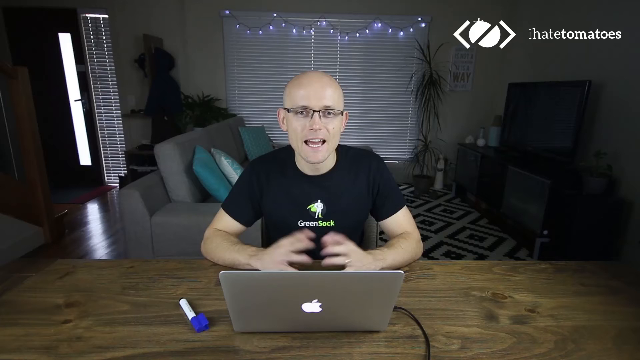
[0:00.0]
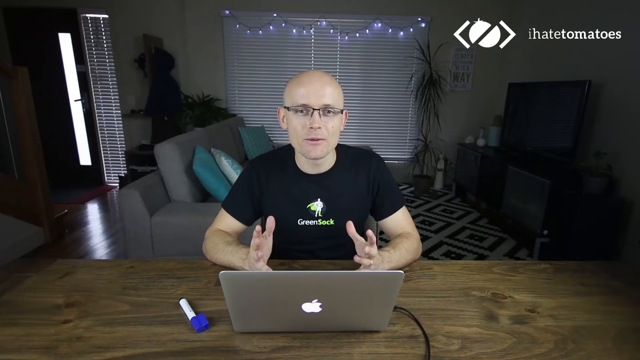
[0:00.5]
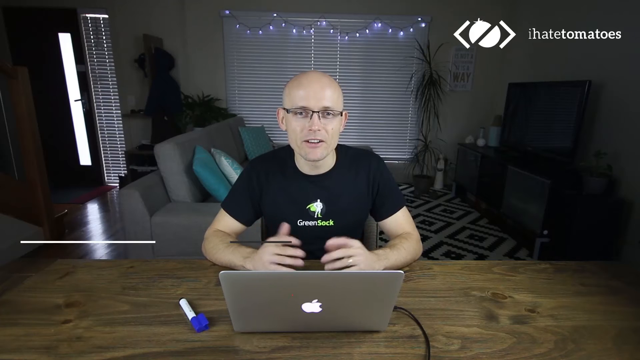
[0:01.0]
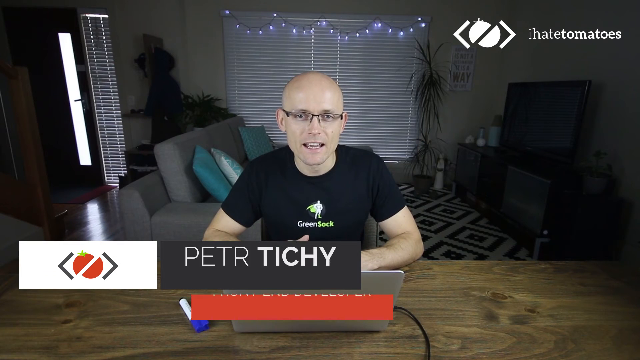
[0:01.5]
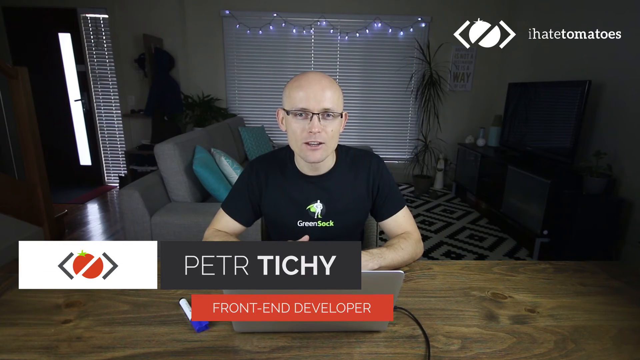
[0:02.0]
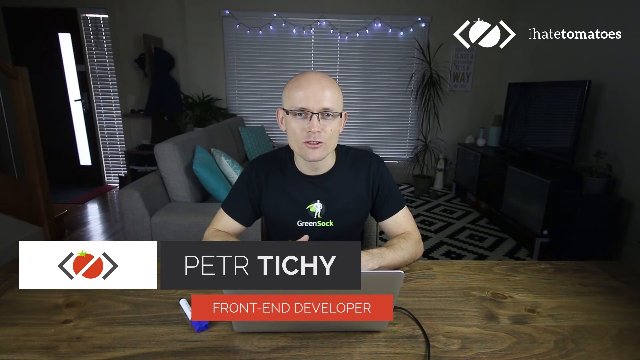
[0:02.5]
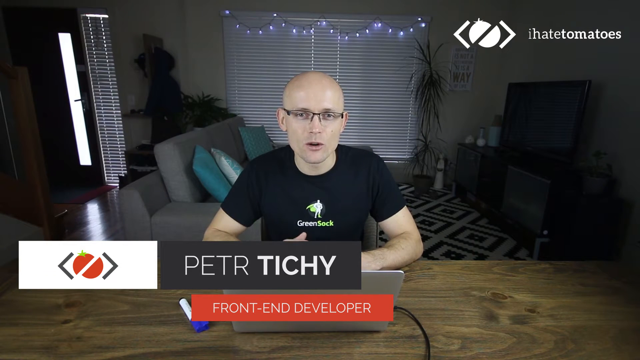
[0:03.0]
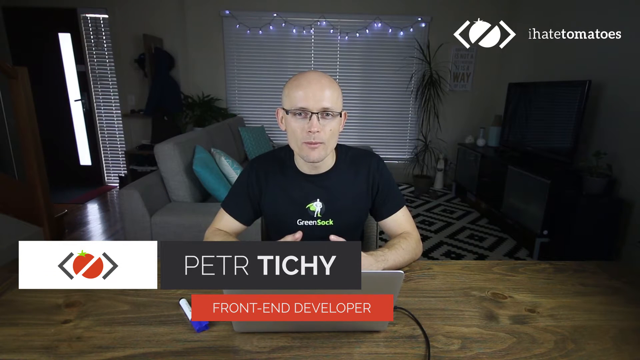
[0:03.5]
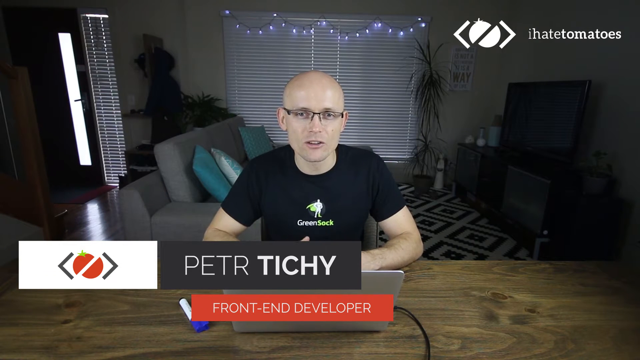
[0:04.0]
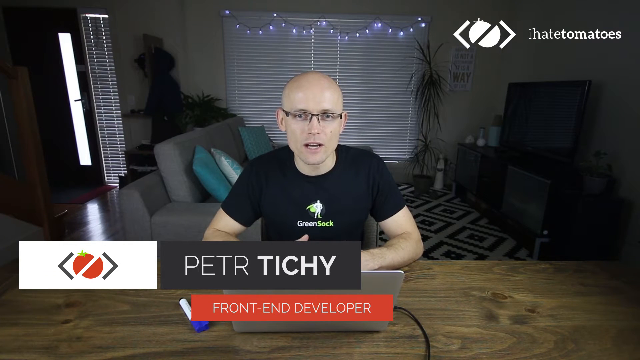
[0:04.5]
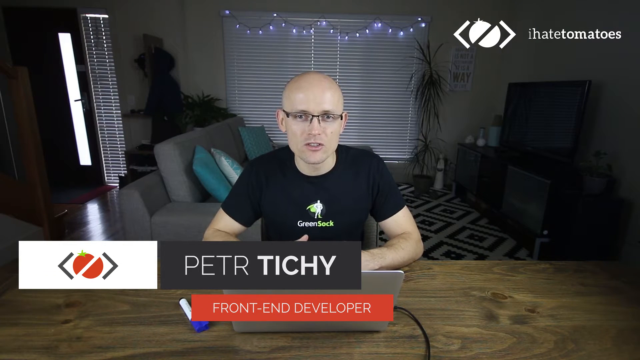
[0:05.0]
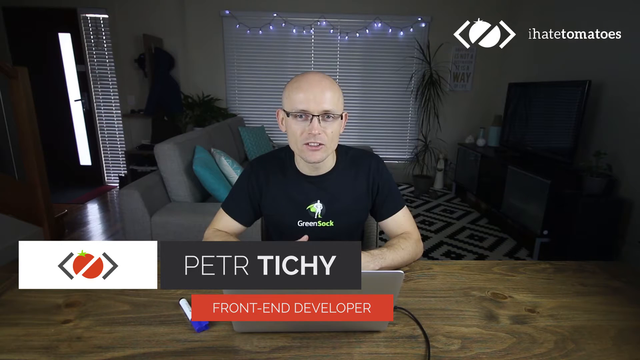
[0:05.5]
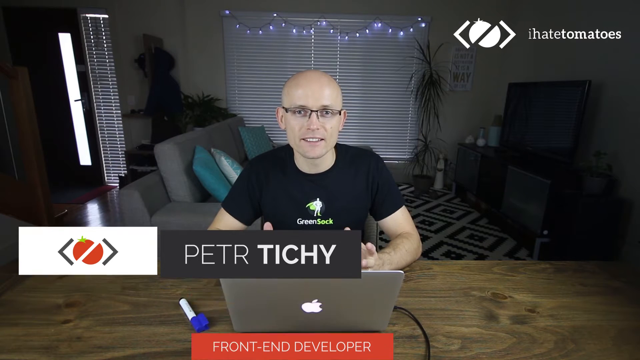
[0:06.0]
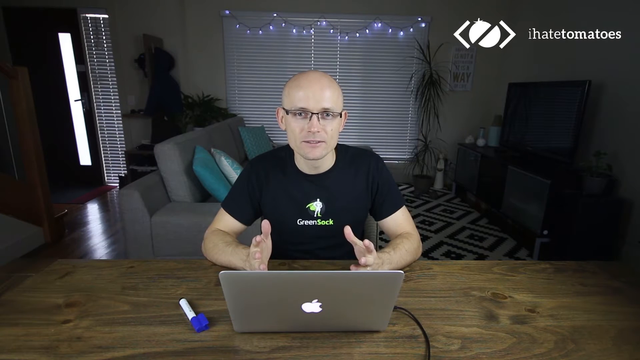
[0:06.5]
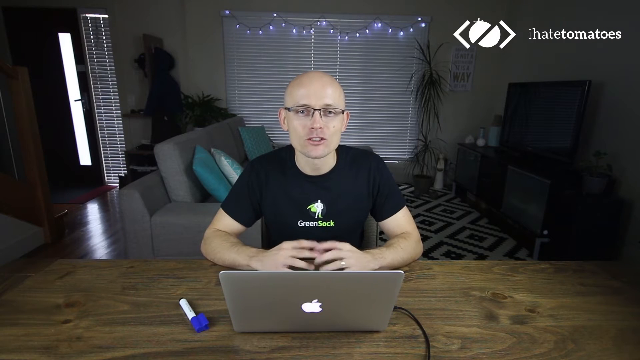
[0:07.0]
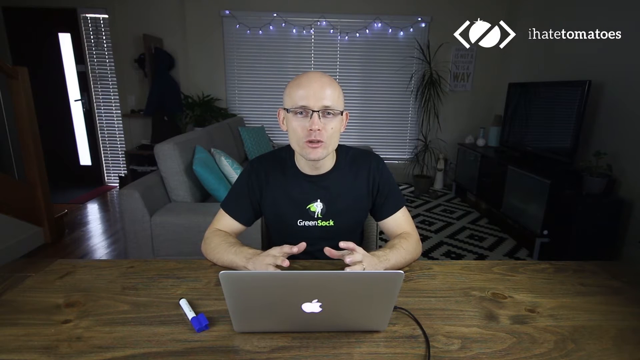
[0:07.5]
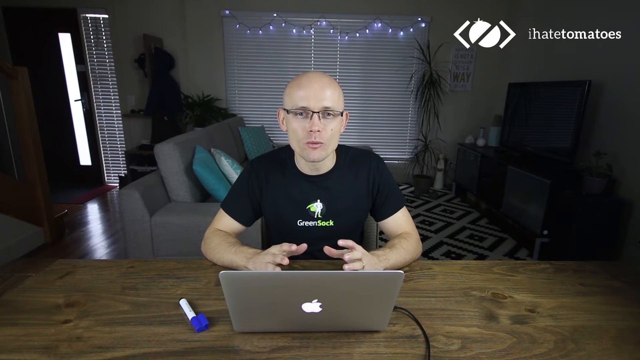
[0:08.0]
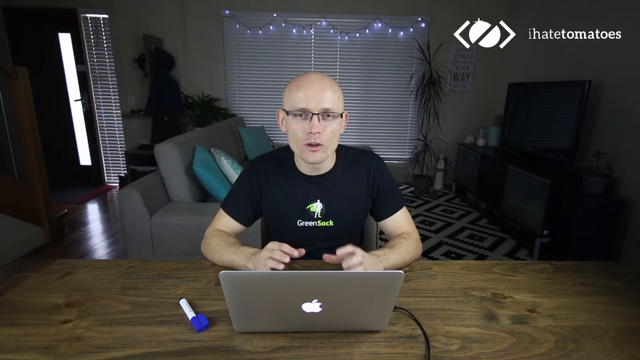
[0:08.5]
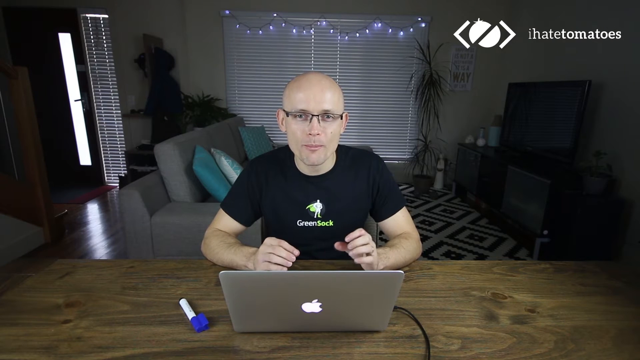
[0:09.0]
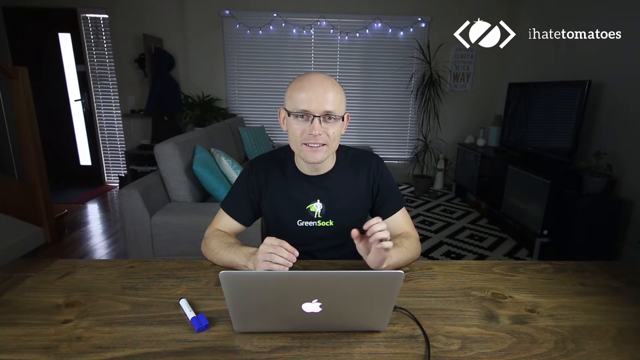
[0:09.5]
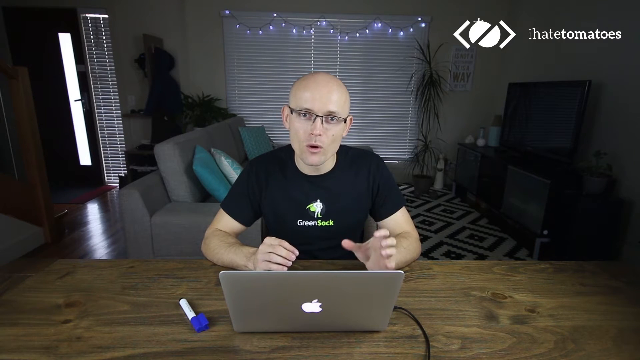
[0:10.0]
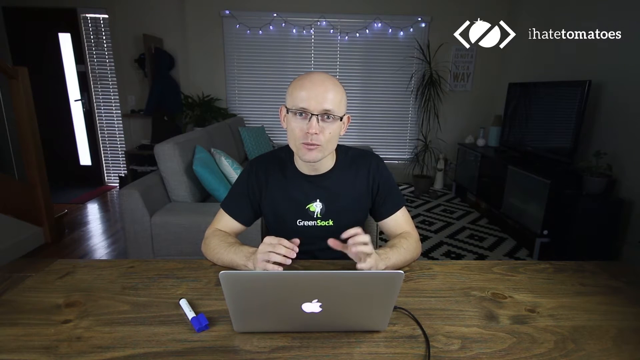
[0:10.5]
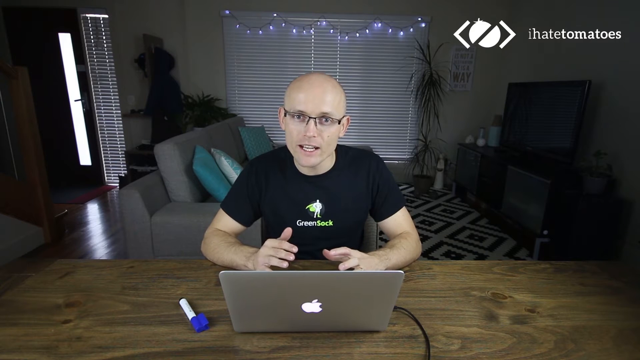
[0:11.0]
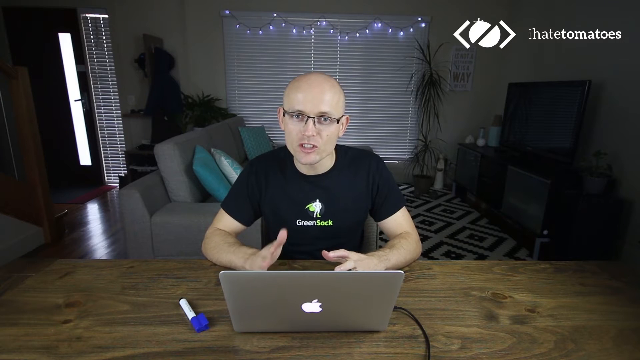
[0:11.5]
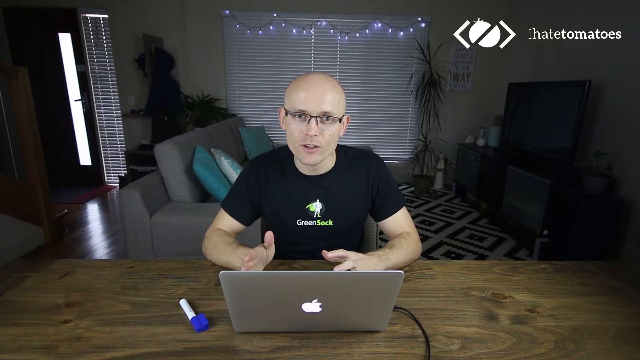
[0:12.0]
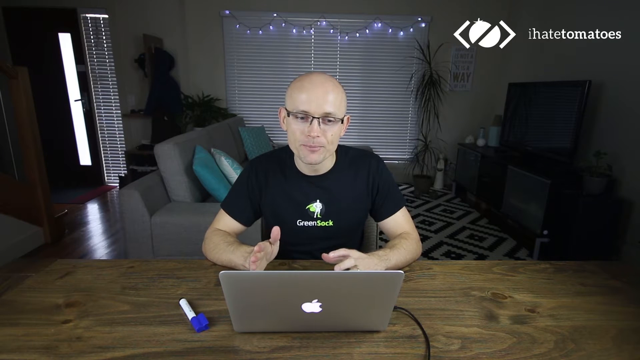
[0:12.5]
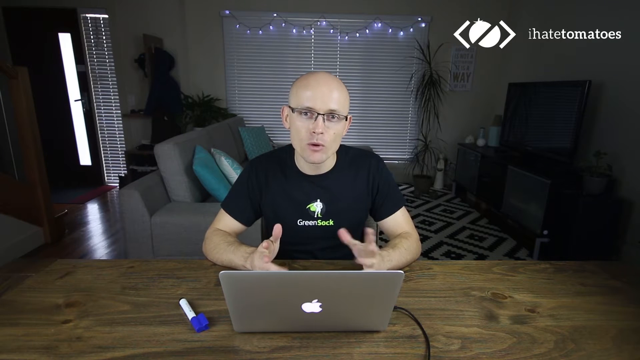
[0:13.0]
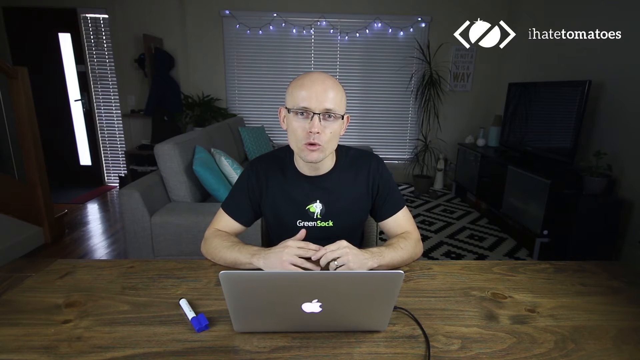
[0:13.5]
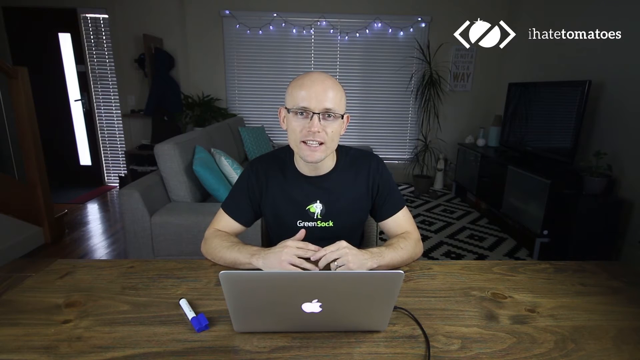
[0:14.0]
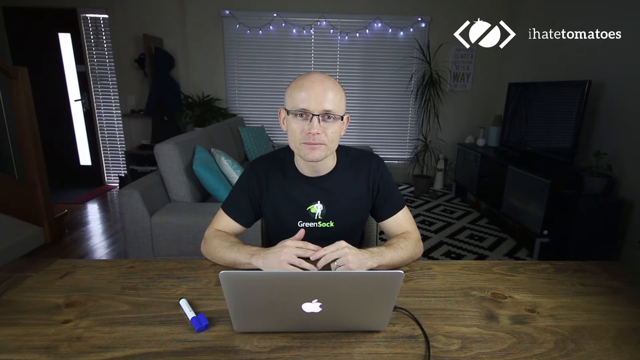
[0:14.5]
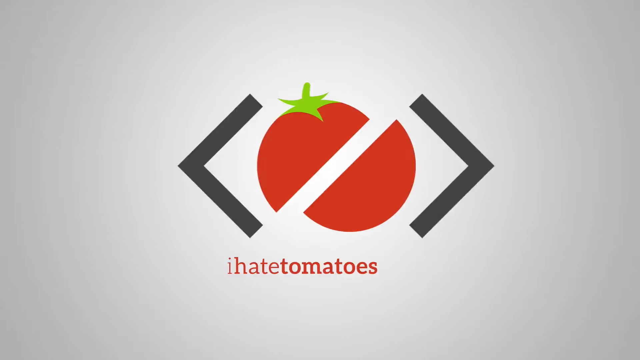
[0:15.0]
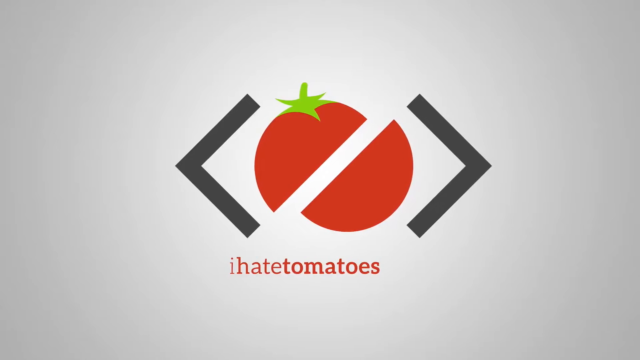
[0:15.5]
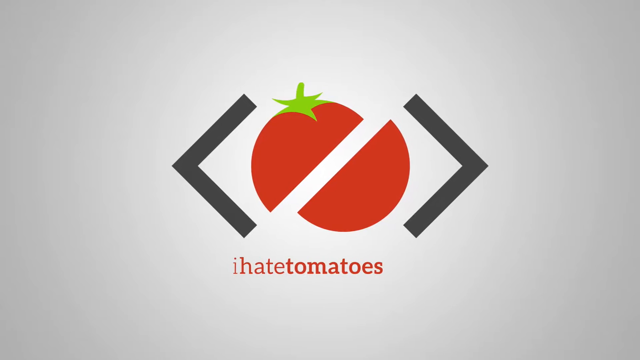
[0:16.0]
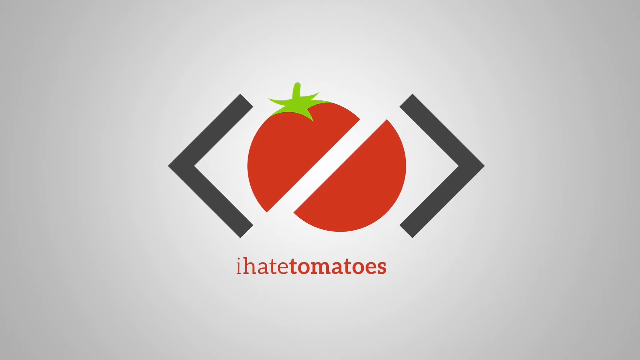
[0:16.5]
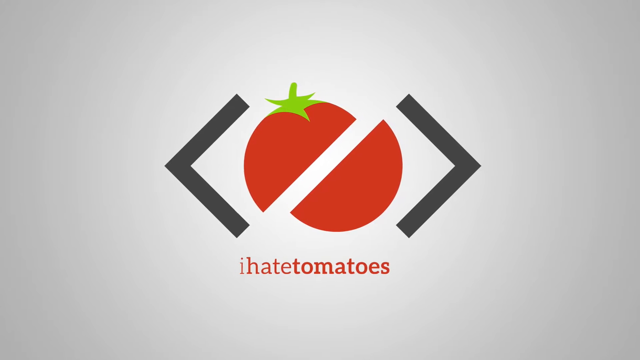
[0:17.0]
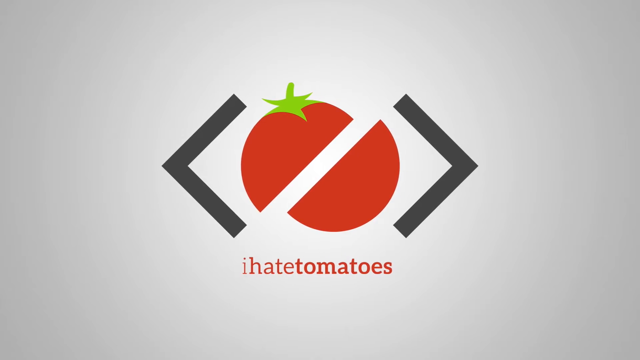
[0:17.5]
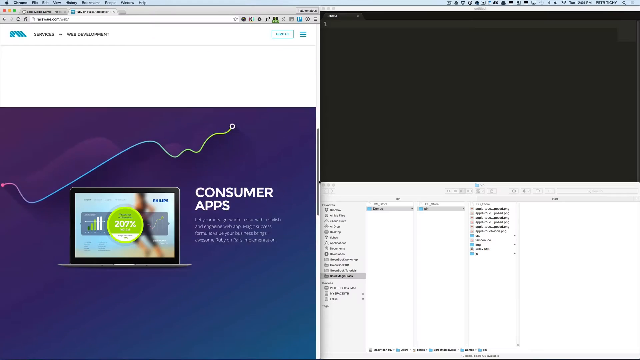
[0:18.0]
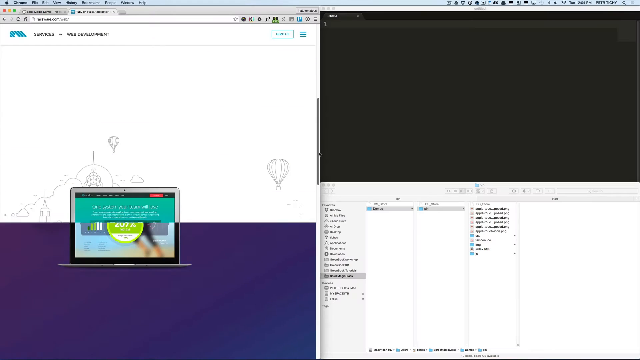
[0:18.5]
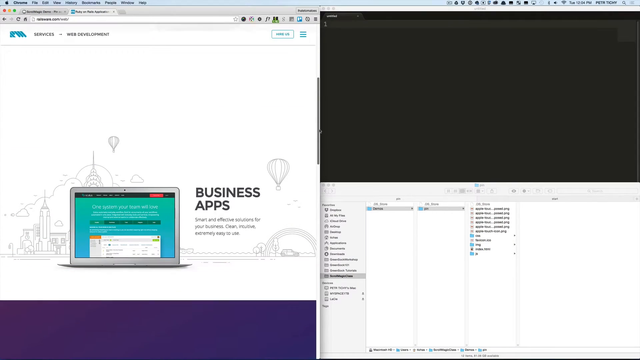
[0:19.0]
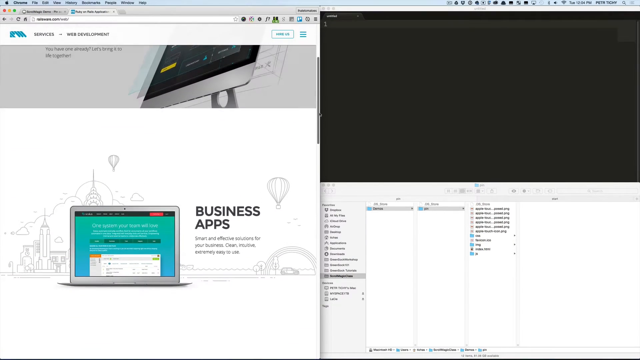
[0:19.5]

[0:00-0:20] A white man with a bald head is in a living room. There is a logo with writing underneath it. He is in front of a desk with a laptop, and on the desk there appears to be a writing utensil. Behind him is what looks like a large window with blinds, with sparkly lights at the top of the blinds. There are pillows, and a screen TV is to the right of the couch; there also appear to be some dressers for storage. To the right of the television, a large, tall plant grows up to about the height of the window. The man seems to be explaining something and gestures with his hands. Text appears that says "Petr" (spelled P-E-T-R), with a logo to the left of the name; this information then drops off the screen. The man continues gesturing, apparently explaining something. Then an image appears of what looks like a tomato surrounded by two angle brackets, with brown lowercase words underneath that say "i hate tomatoes". The tomato has a slanted break through its middle so the white of the screen shows through.